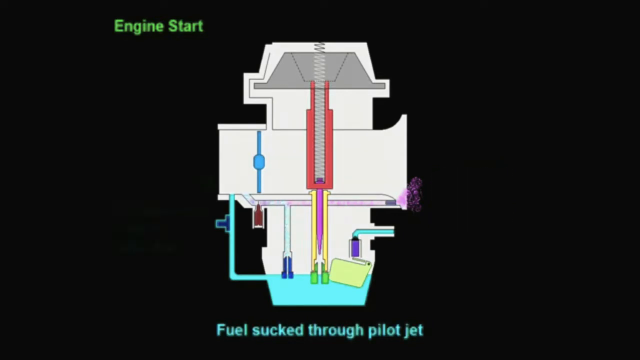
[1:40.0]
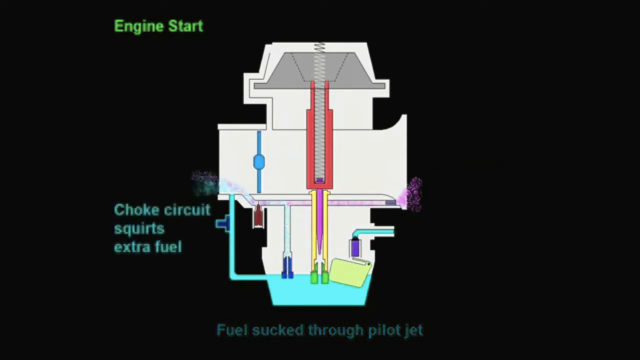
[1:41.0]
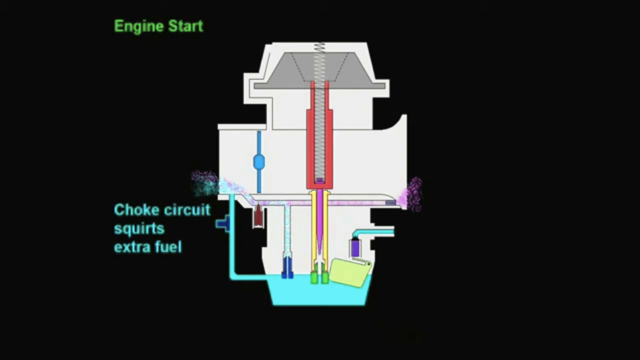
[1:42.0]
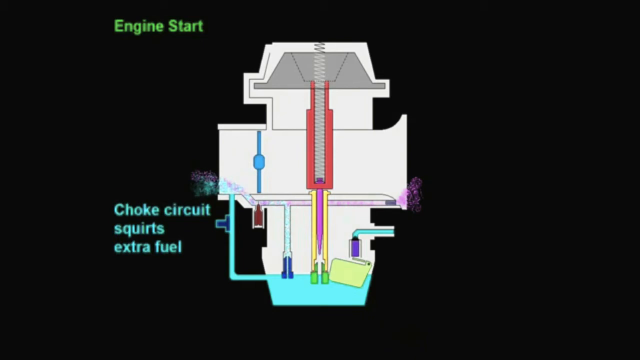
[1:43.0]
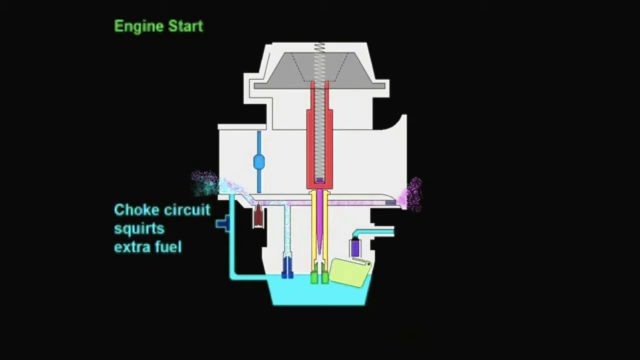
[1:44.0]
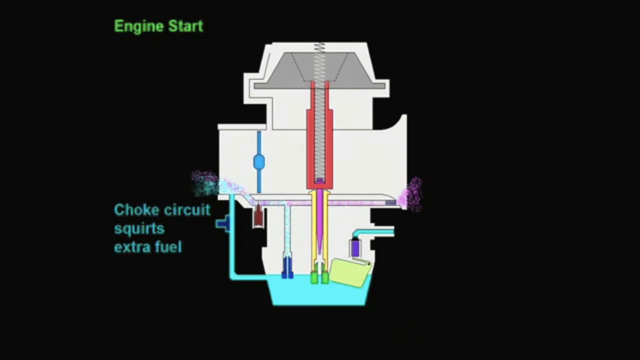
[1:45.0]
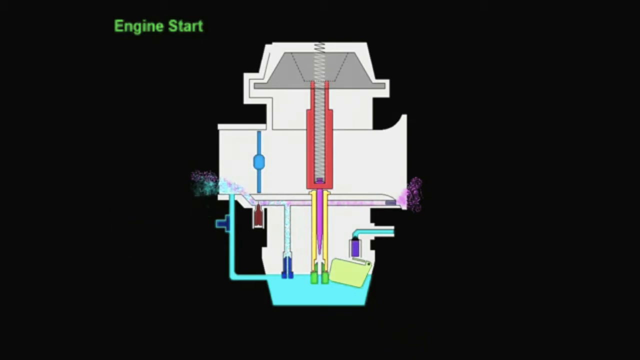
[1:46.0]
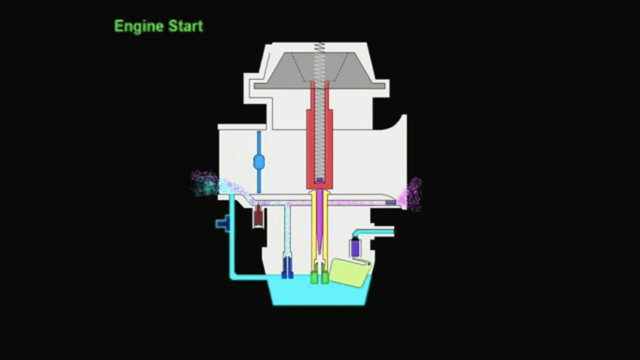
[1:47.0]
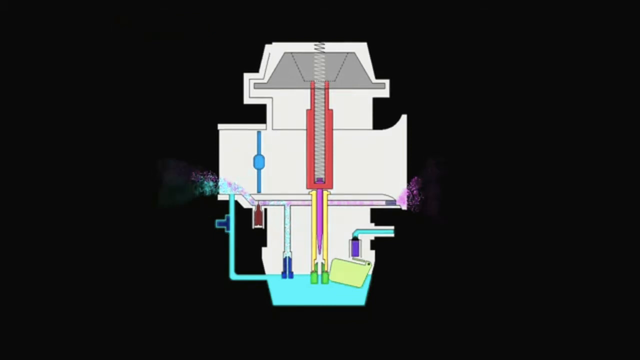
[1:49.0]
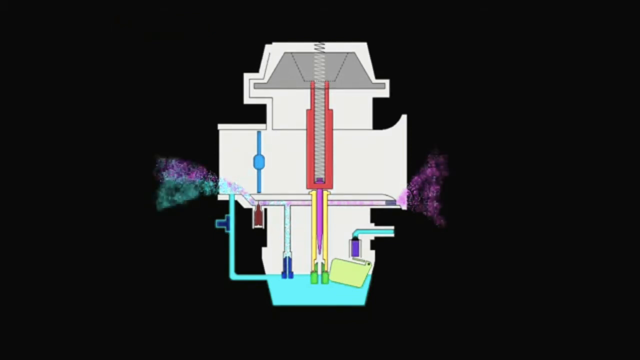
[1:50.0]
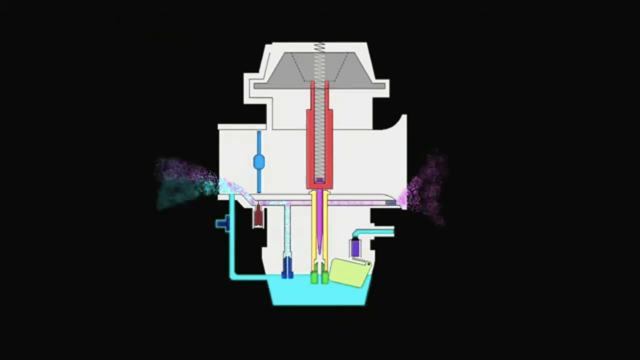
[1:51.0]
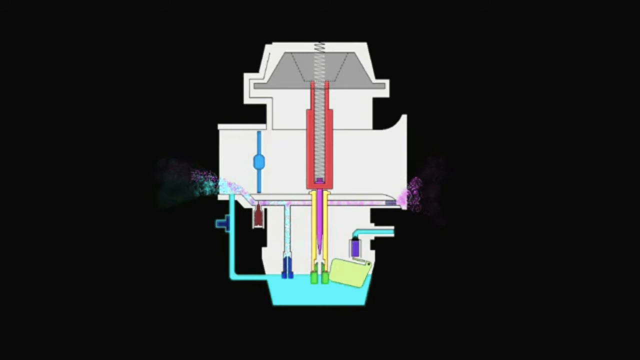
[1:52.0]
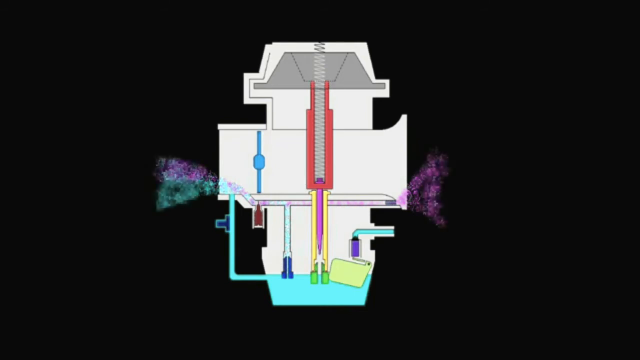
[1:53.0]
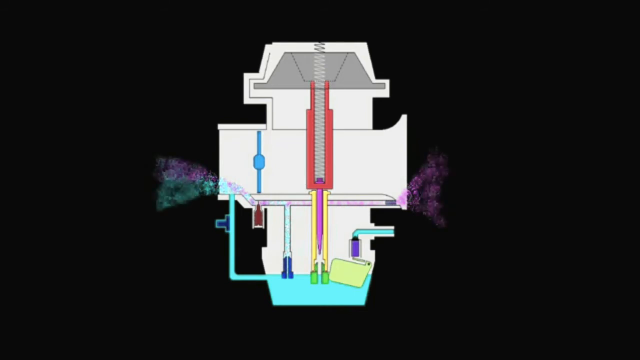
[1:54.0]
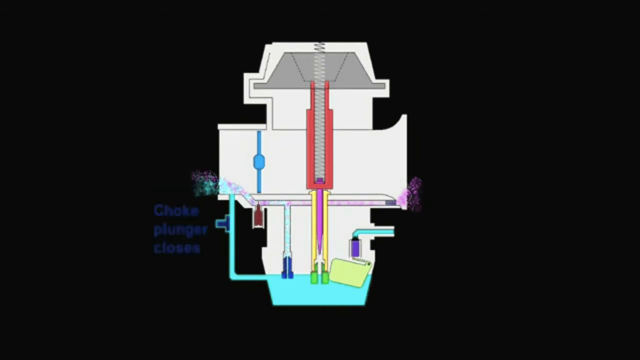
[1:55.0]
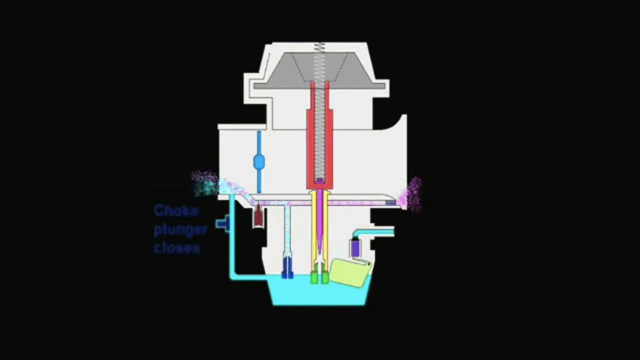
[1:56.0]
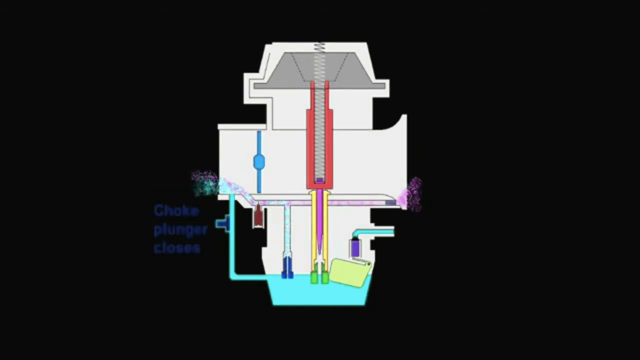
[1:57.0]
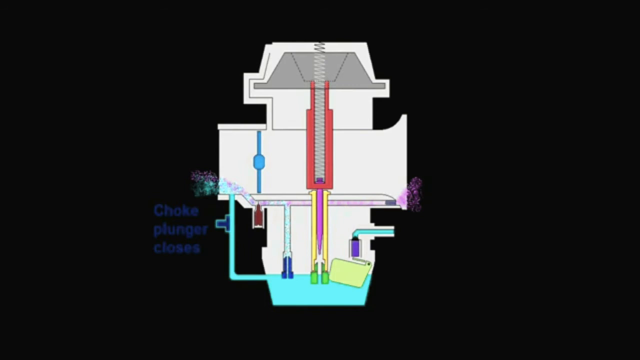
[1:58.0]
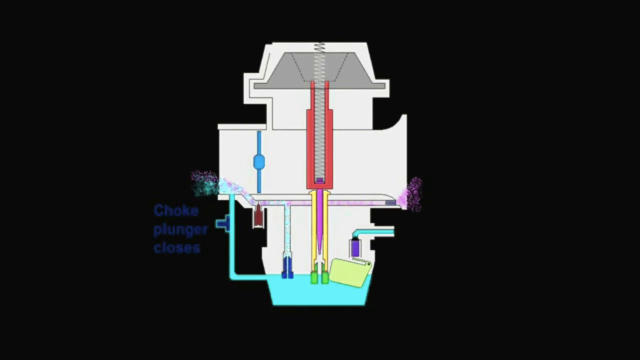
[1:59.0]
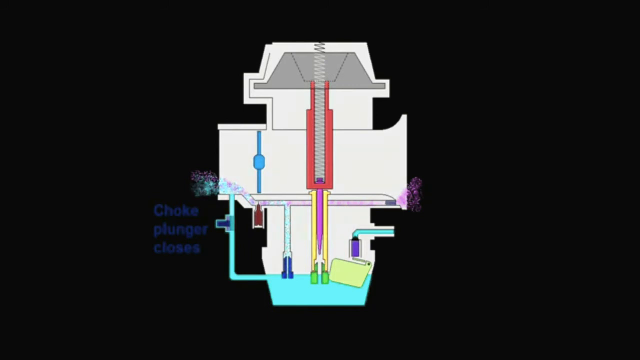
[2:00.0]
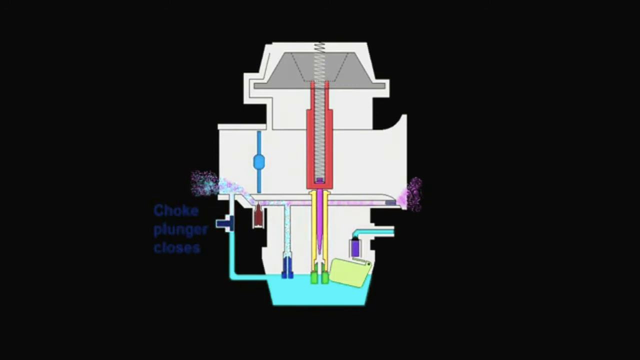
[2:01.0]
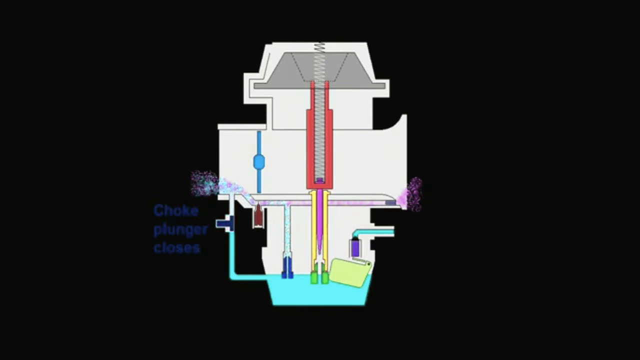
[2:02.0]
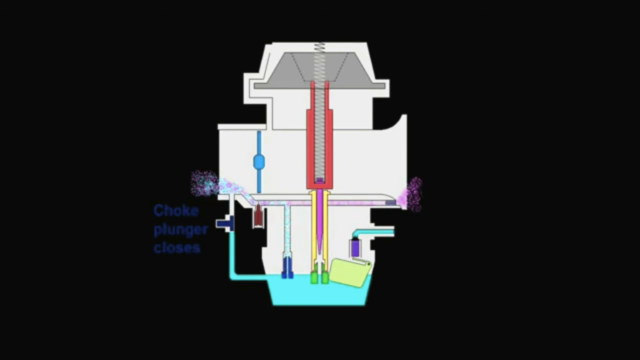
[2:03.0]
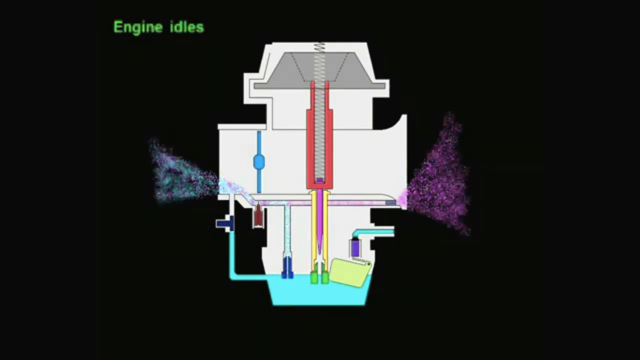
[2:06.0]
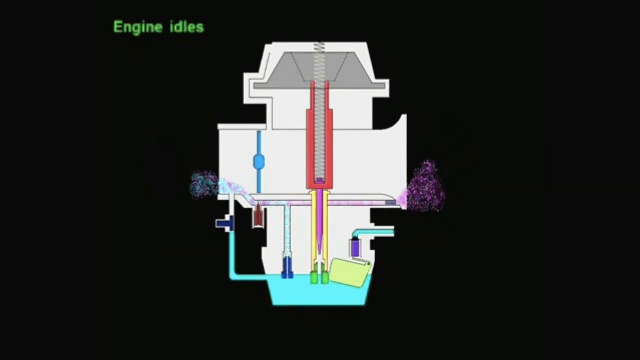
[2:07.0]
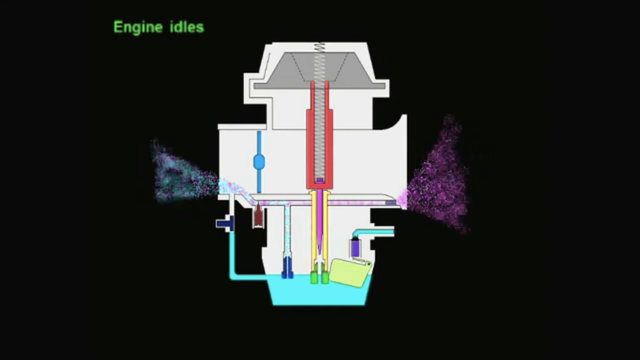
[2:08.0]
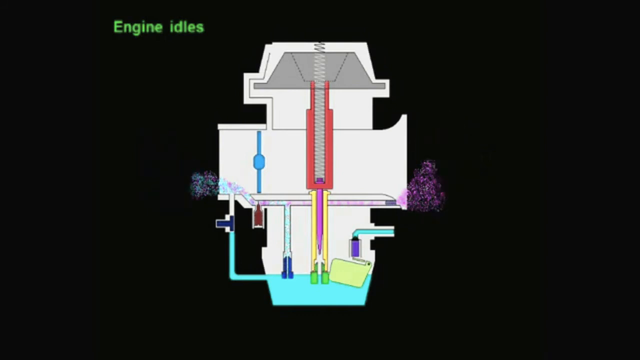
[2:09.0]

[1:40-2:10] A diagram shows the circuit squirting extra fuel, with parts going in and out, as part of a whole diagram of how the engine works. Animations show the choke plunger closing, and the engine idling. The open diagram shows how things are sprayed out, where the different valves come into play, where the engine starts and ends, and what is underneath, where there appears to be some fuel and some water. The animations are colorful.